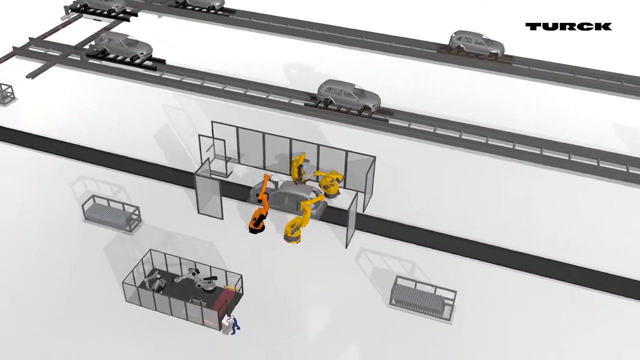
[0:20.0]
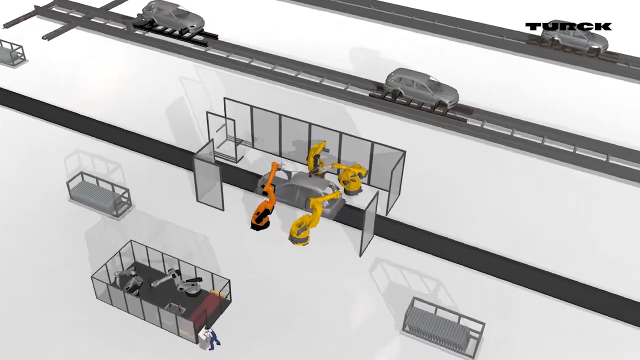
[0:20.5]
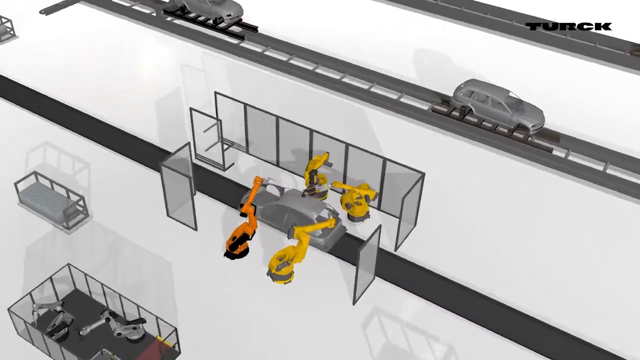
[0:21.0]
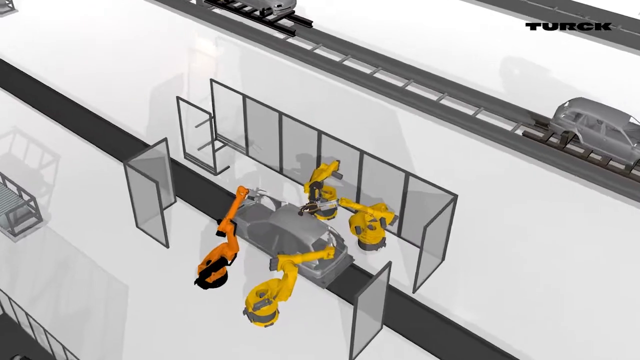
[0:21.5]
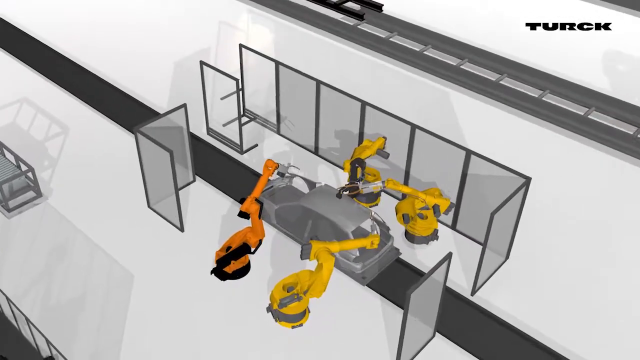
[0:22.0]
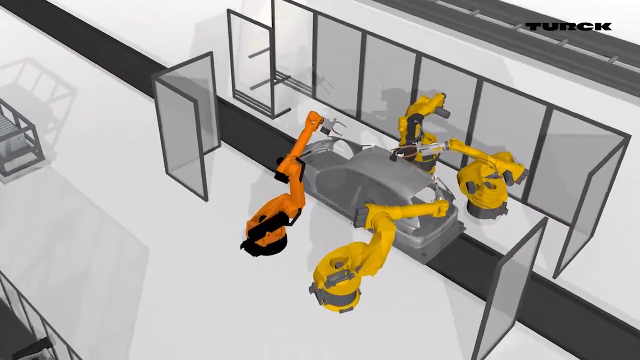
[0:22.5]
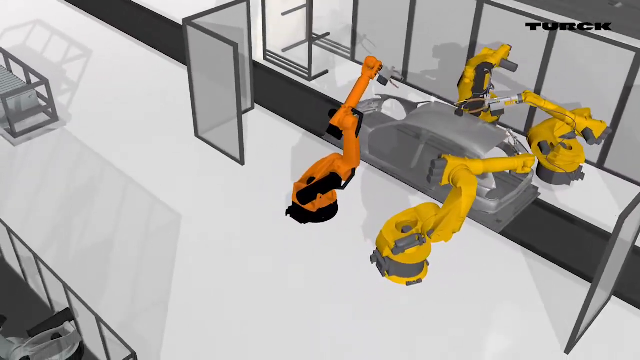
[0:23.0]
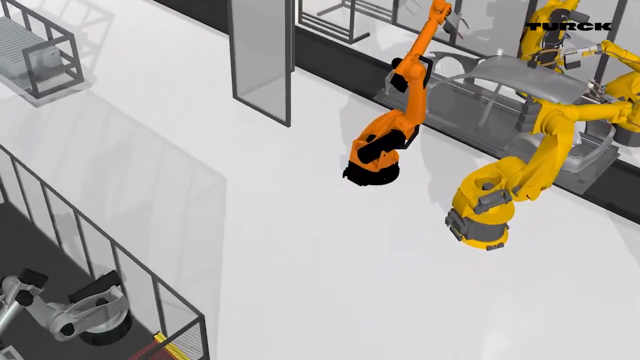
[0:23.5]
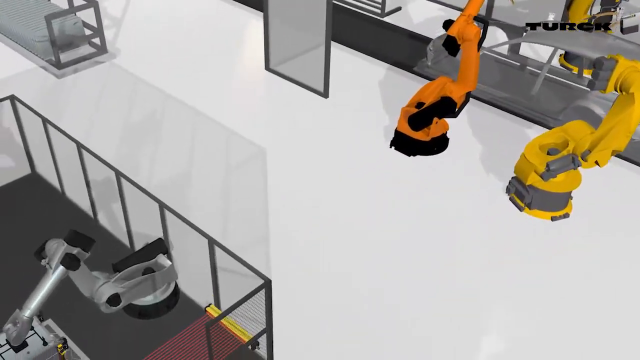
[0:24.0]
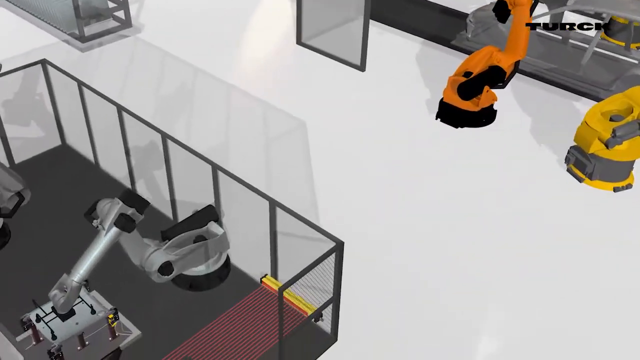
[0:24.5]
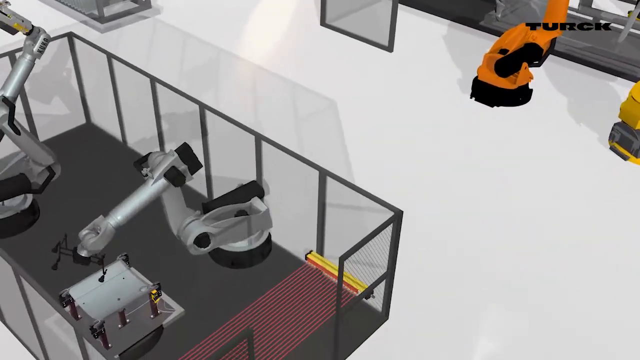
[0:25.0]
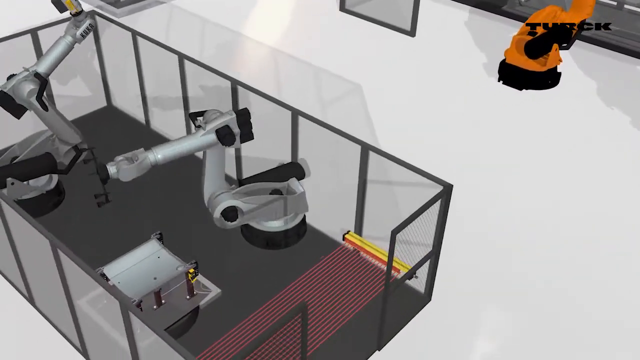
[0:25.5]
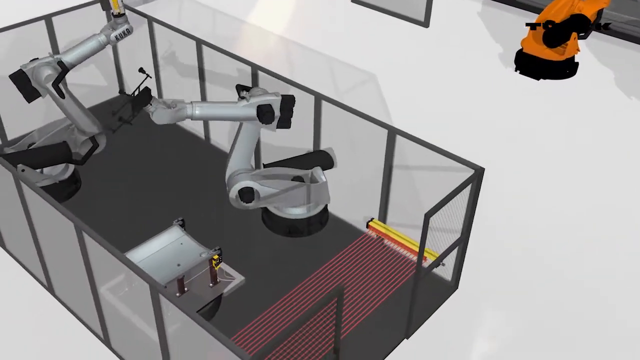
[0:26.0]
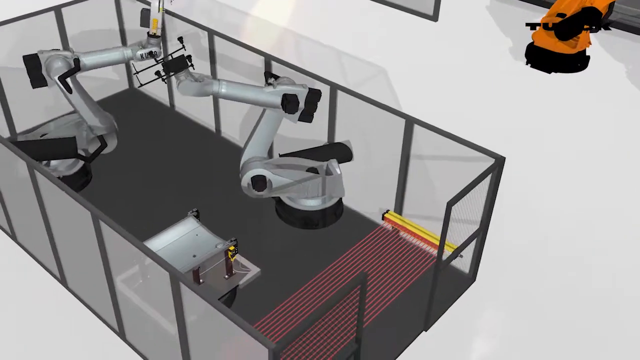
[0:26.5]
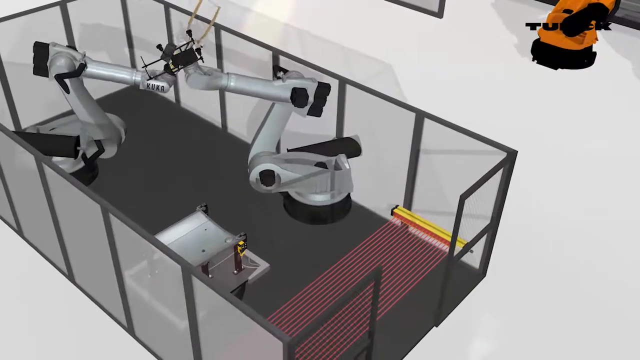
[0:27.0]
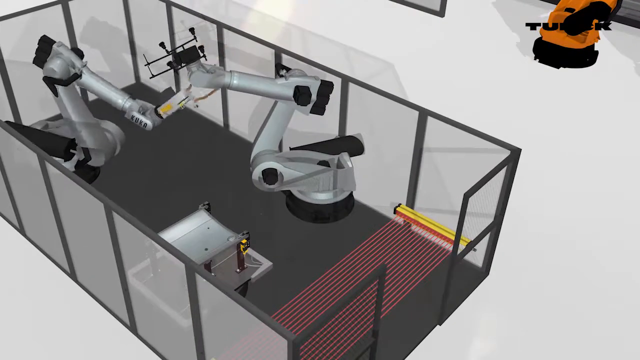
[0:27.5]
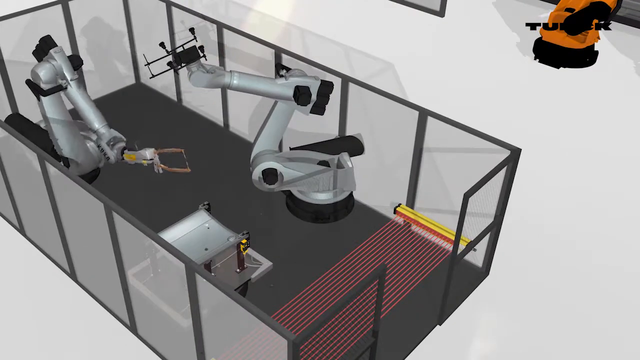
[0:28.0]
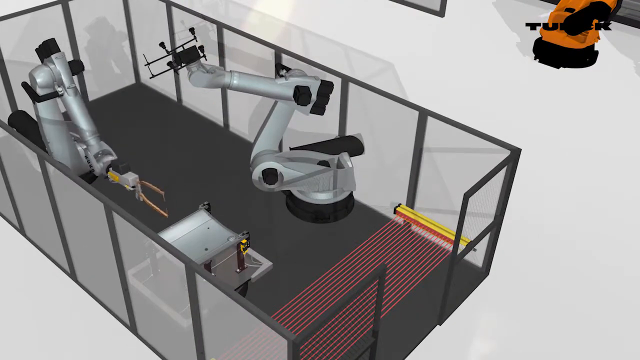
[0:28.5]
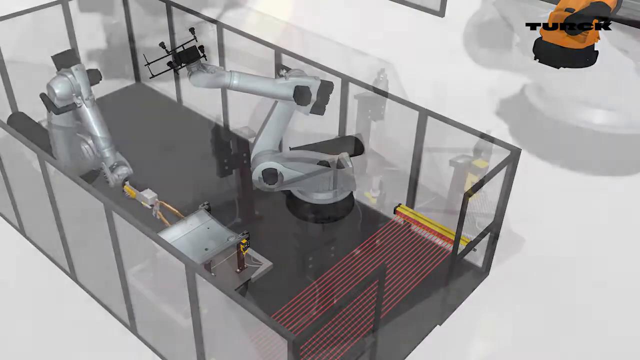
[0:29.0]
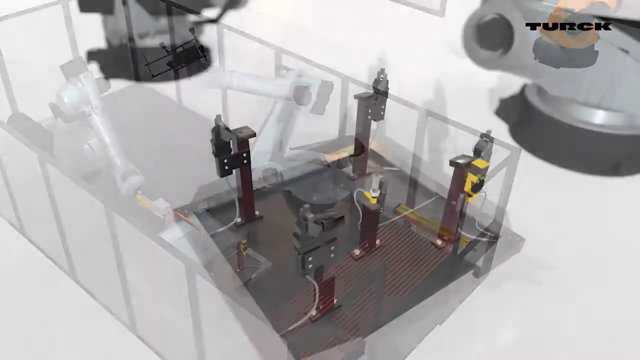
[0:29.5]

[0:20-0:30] Robots work in the factory of an automobile company, building the sensor. Vehicles pass through the machine, and the robots assemble the automobile, inserting parts and the sensor into the vehicle, showing the procedure of how the sensor is built and placed in the vehicle.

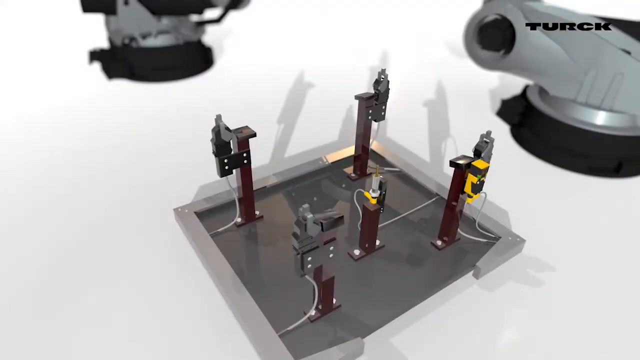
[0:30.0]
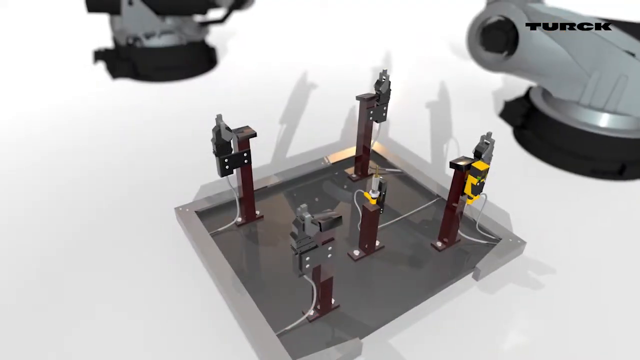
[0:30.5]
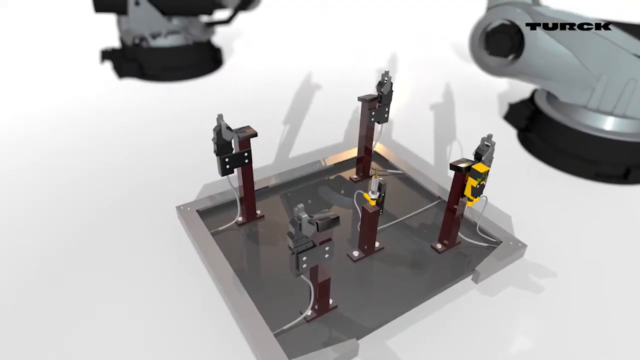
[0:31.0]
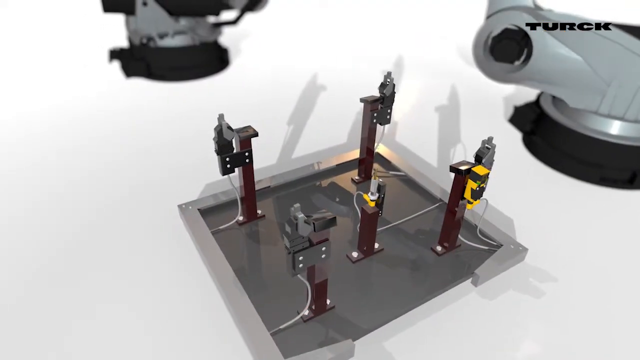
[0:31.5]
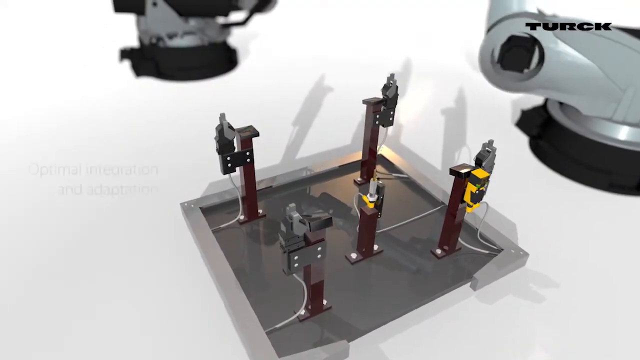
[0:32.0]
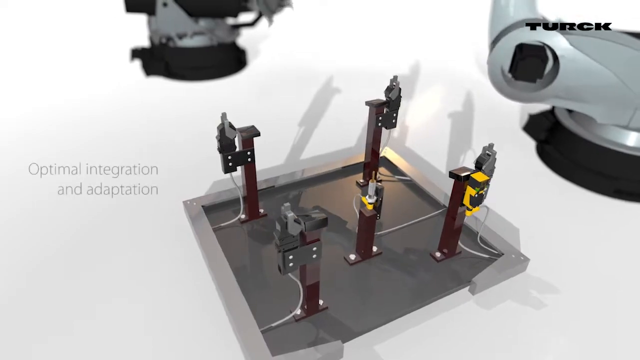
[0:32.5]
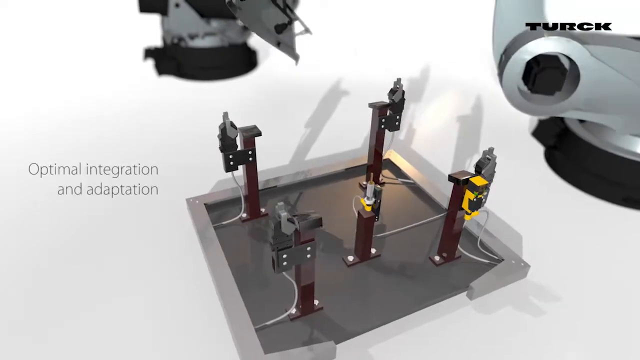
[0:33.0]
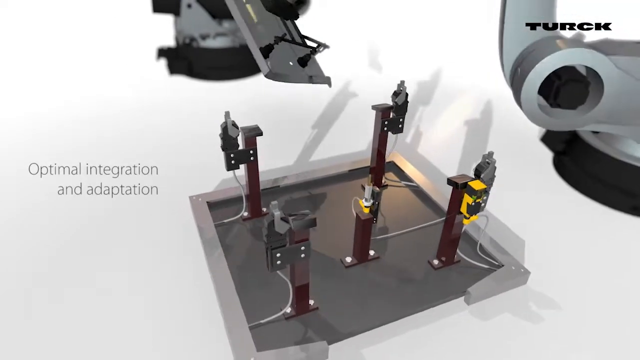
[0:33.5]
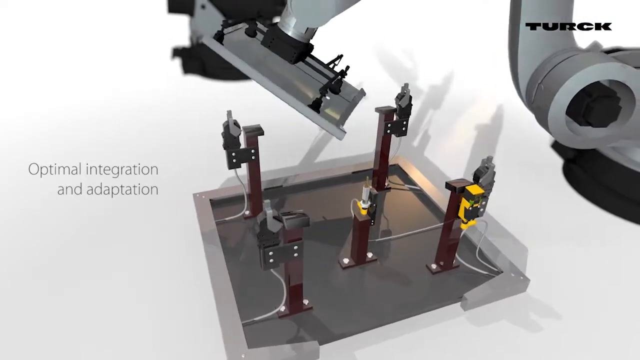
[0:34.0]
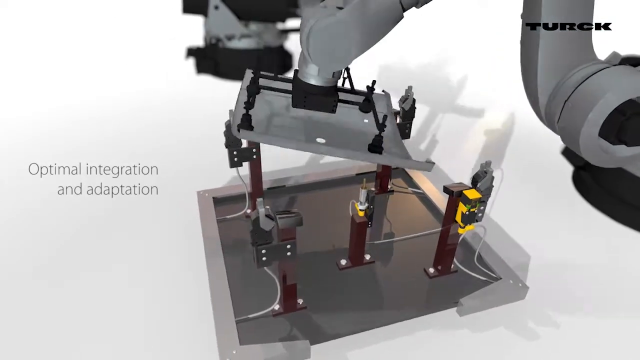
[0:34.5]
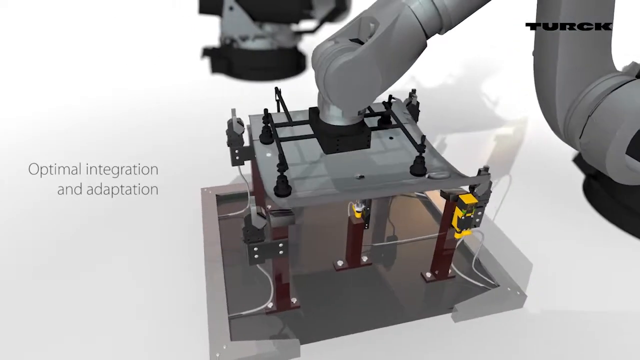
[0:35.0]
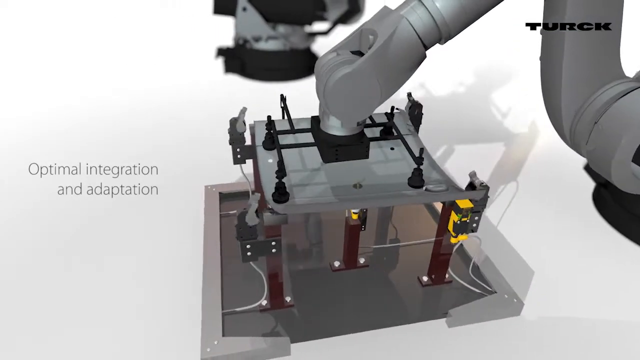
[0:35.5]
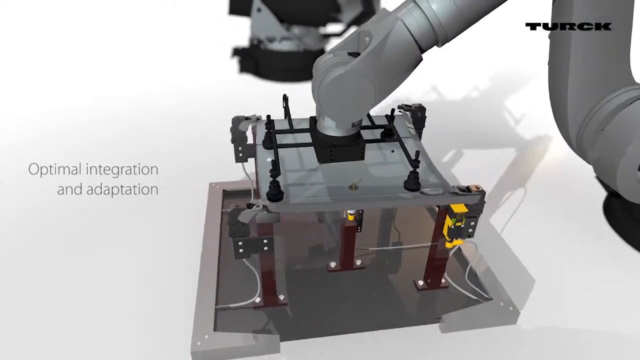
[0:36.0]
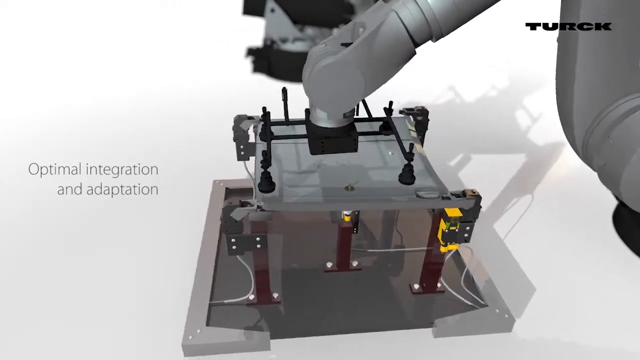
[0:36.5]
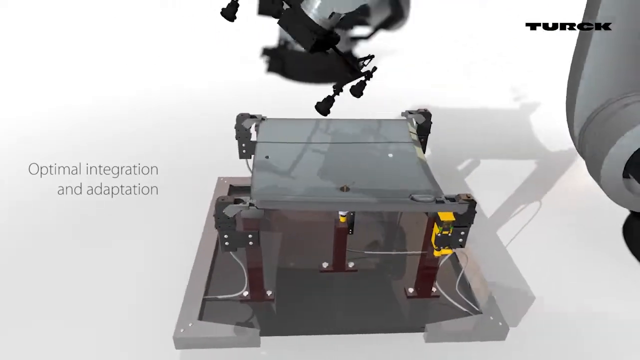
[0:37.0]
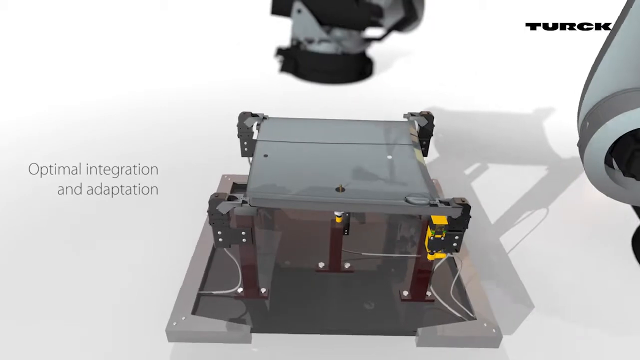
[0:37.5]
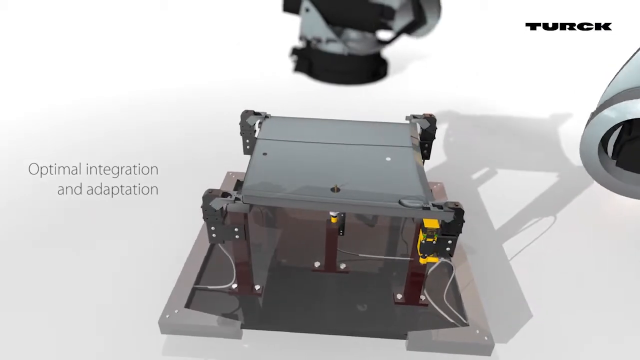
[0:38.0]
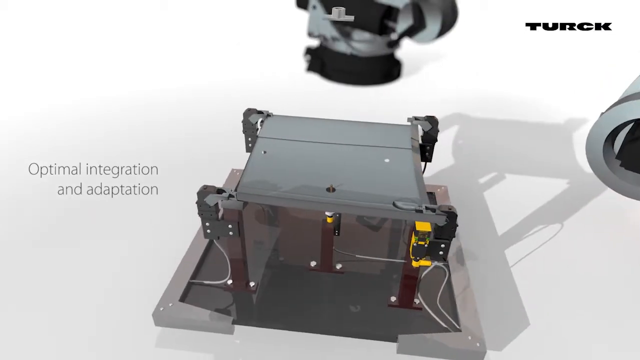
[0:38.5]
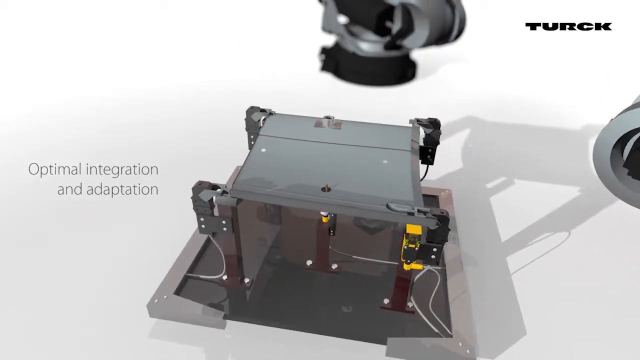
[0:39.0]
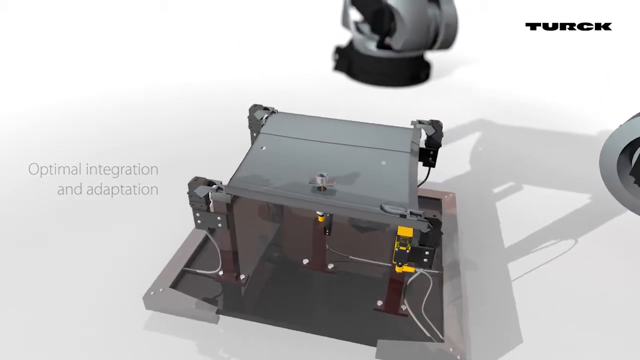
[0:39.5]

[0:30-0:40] A robot puts plates on the sensor platform and screws down the sensor, installing it. A different robot takes the plates where the sensor is and places the plate on the base so the sensor can be properly screwed to the device. The shot shows the production process of a sensor made to fit a car, step after step.